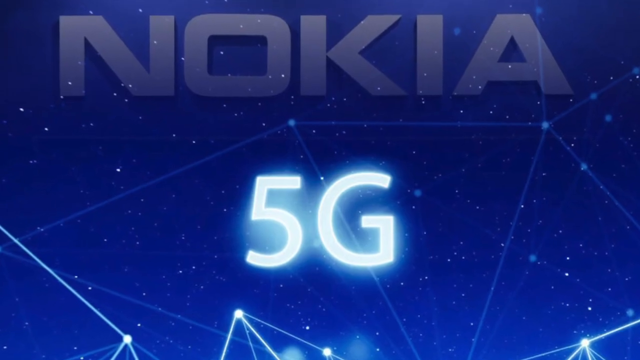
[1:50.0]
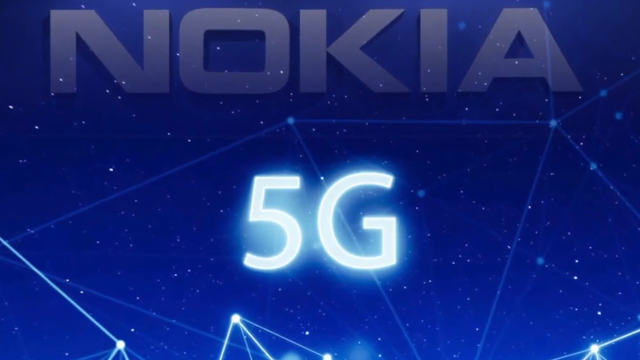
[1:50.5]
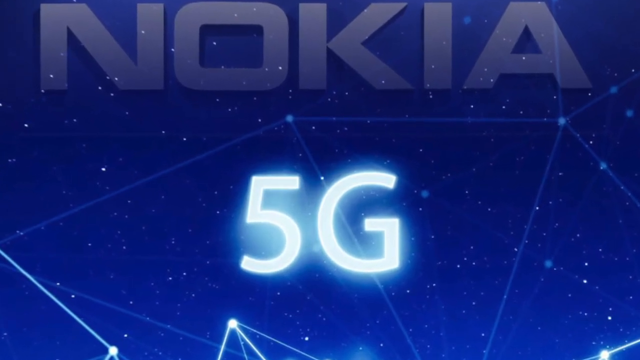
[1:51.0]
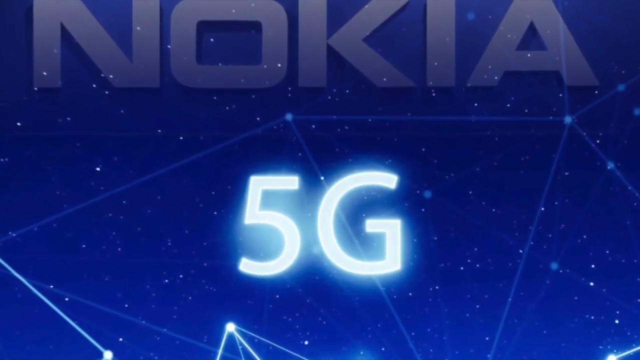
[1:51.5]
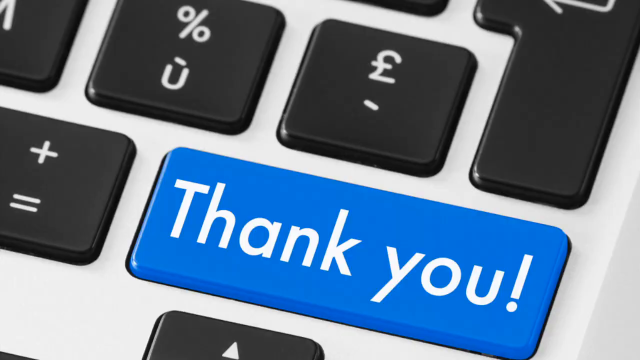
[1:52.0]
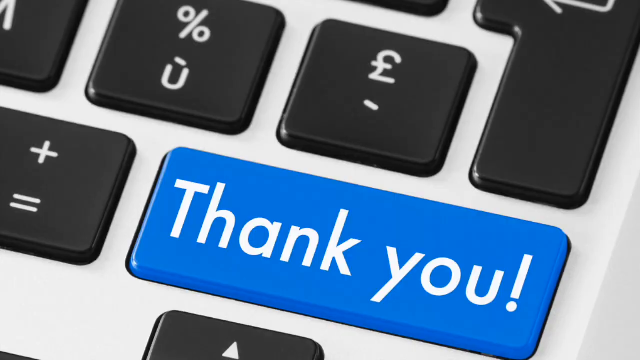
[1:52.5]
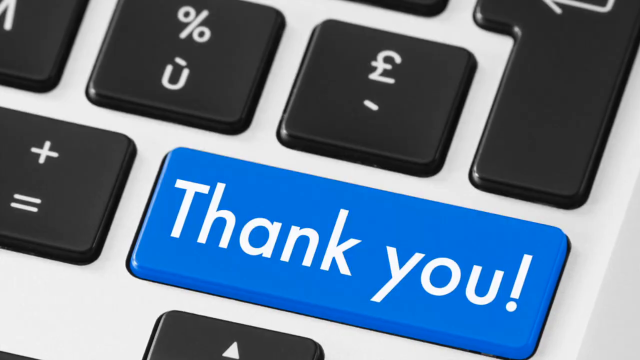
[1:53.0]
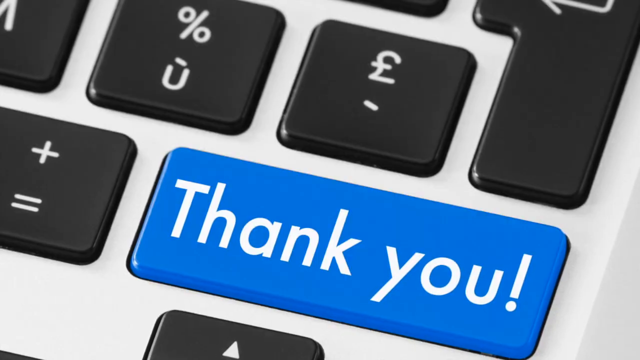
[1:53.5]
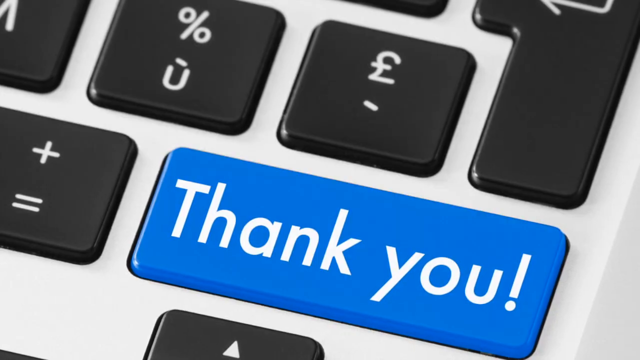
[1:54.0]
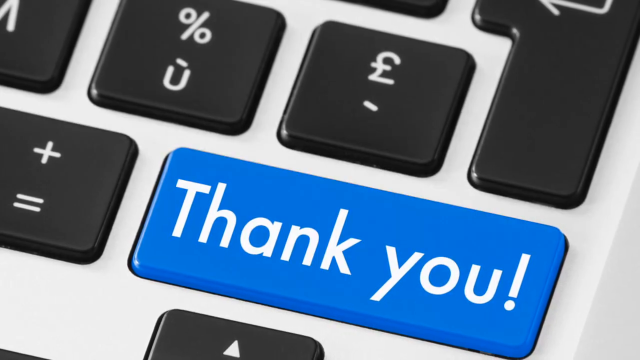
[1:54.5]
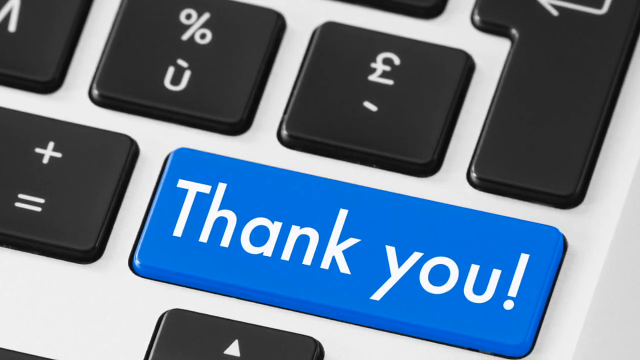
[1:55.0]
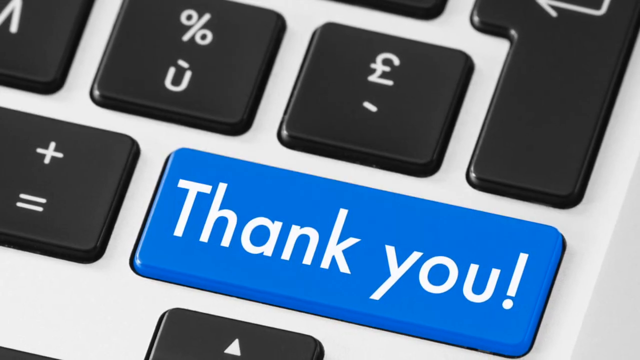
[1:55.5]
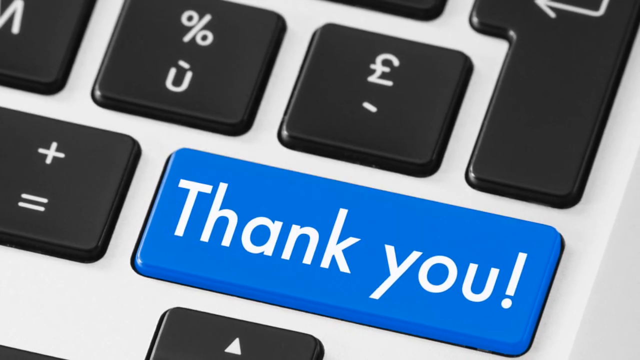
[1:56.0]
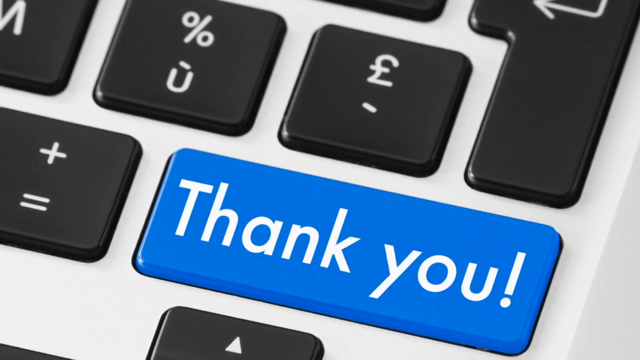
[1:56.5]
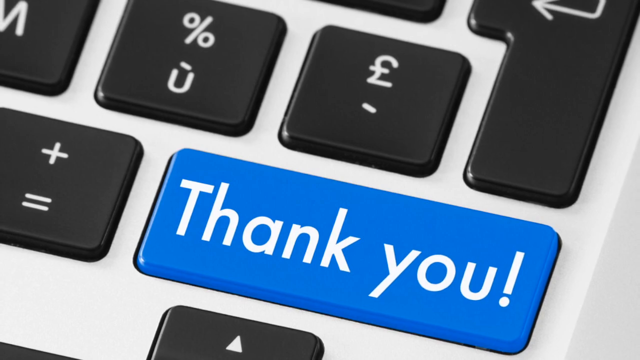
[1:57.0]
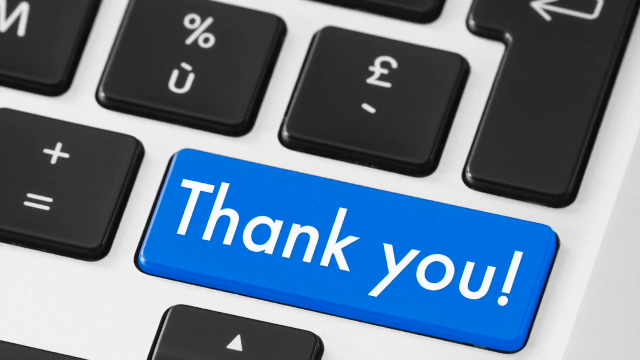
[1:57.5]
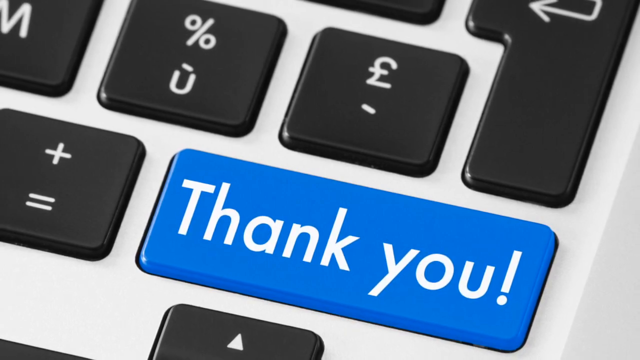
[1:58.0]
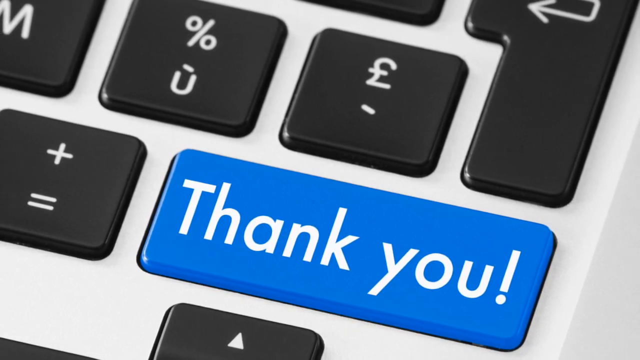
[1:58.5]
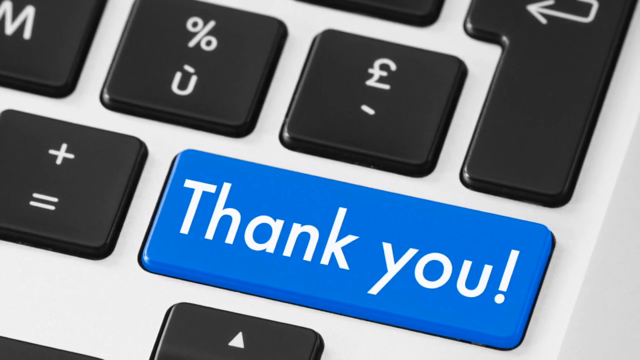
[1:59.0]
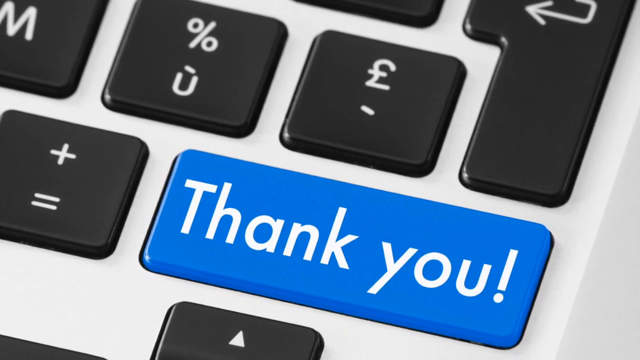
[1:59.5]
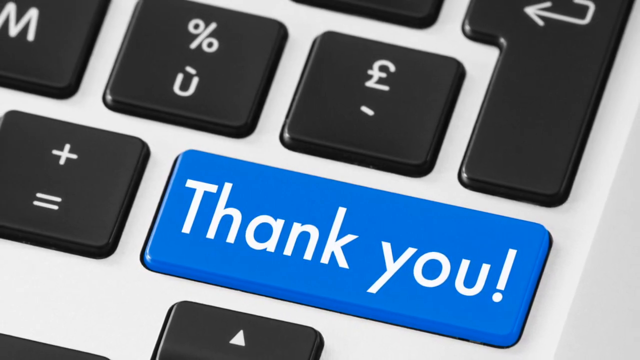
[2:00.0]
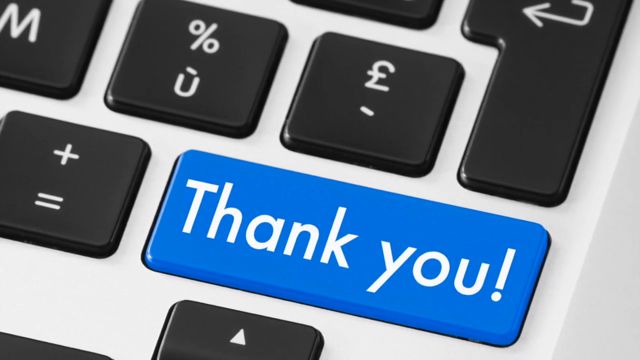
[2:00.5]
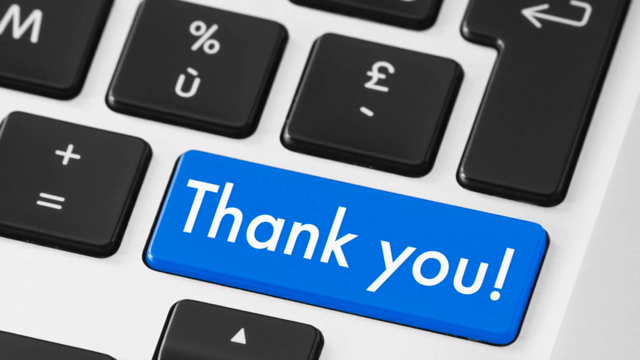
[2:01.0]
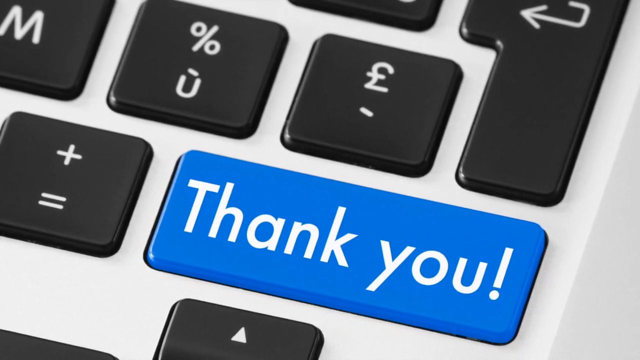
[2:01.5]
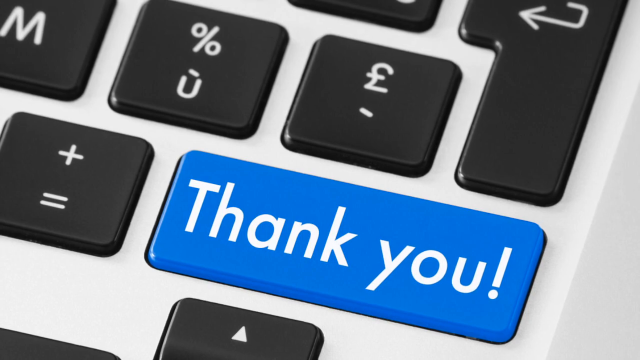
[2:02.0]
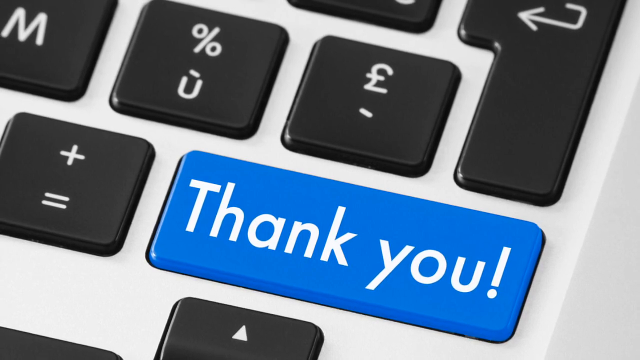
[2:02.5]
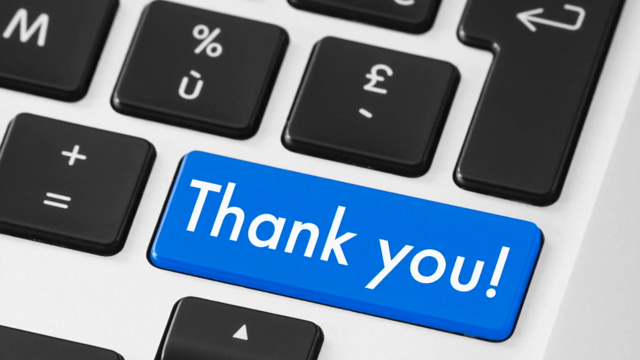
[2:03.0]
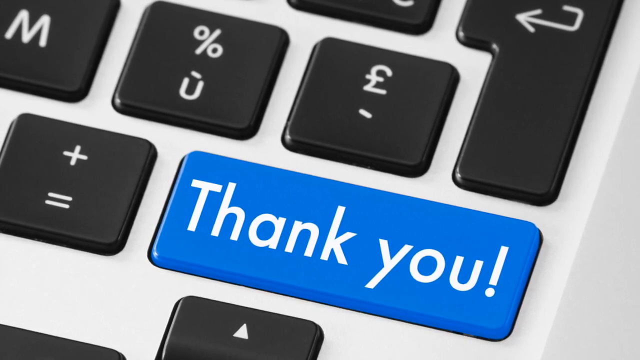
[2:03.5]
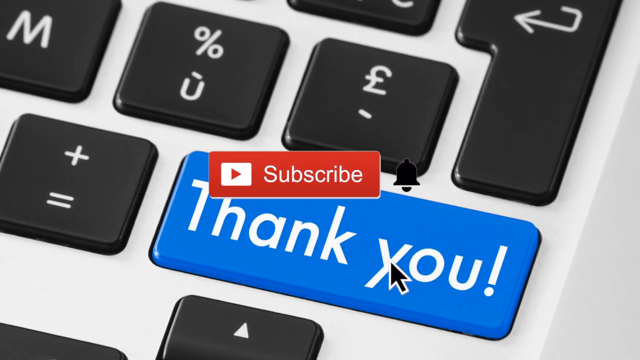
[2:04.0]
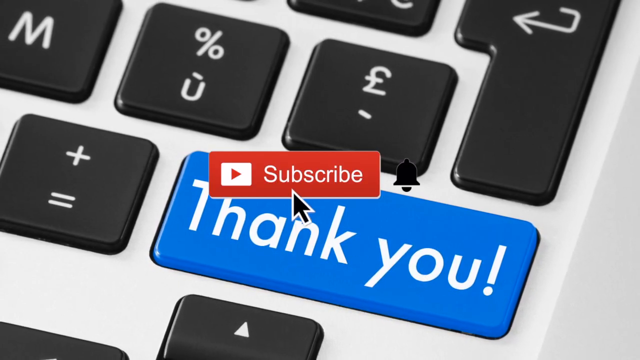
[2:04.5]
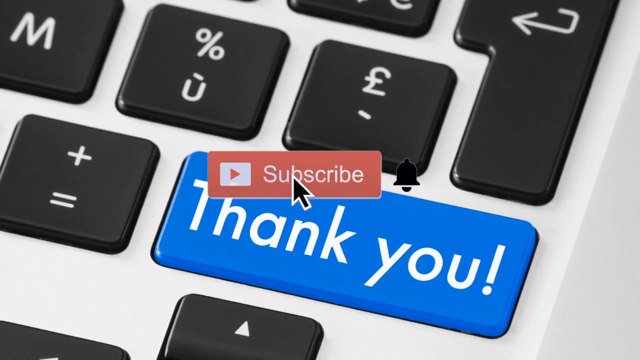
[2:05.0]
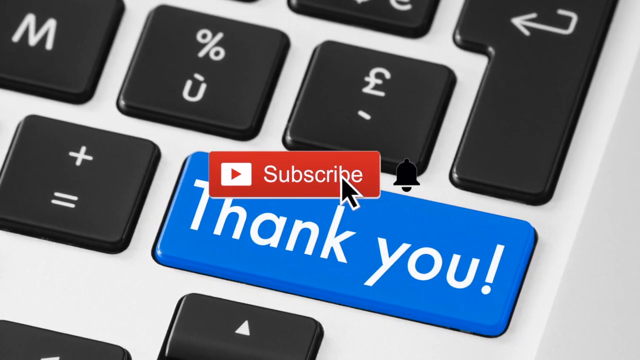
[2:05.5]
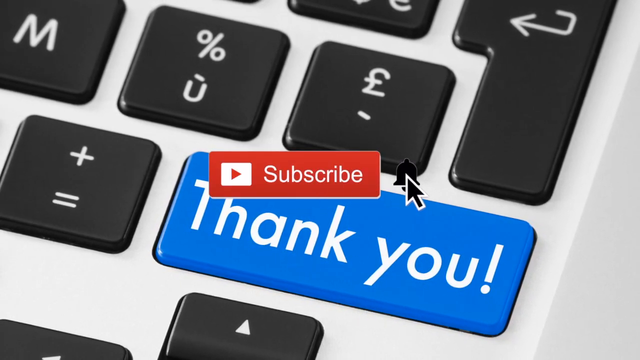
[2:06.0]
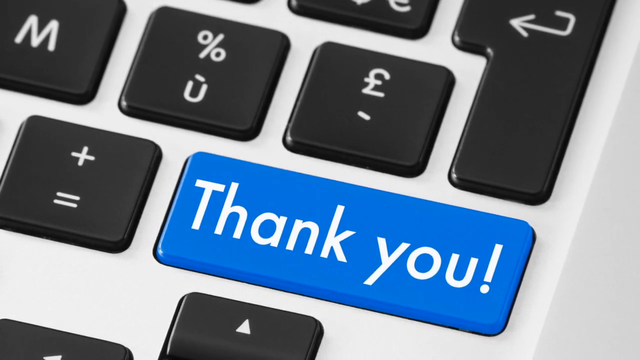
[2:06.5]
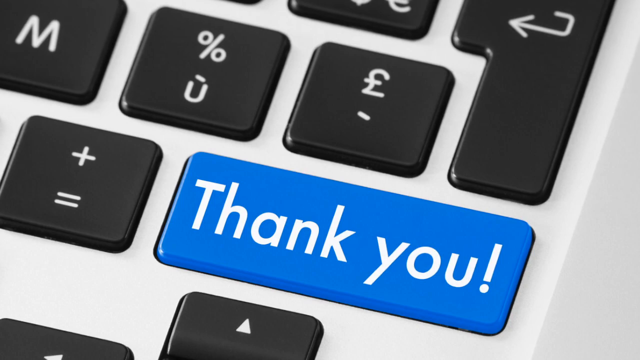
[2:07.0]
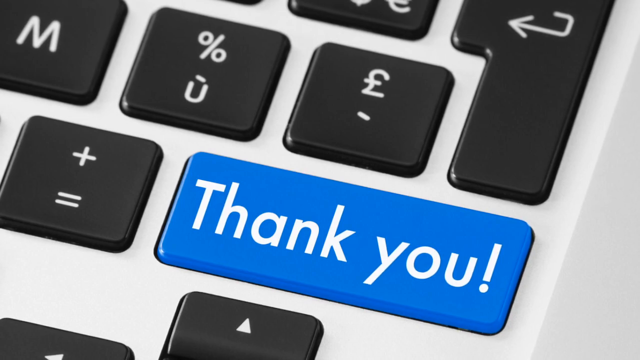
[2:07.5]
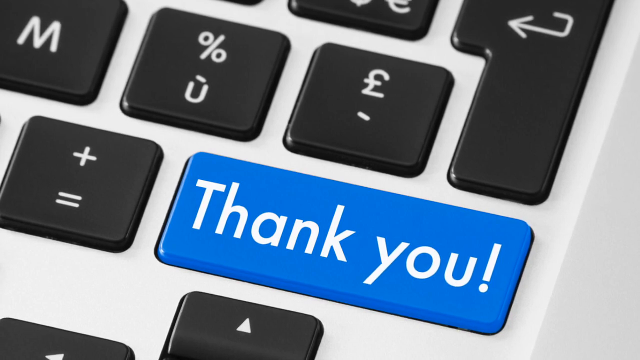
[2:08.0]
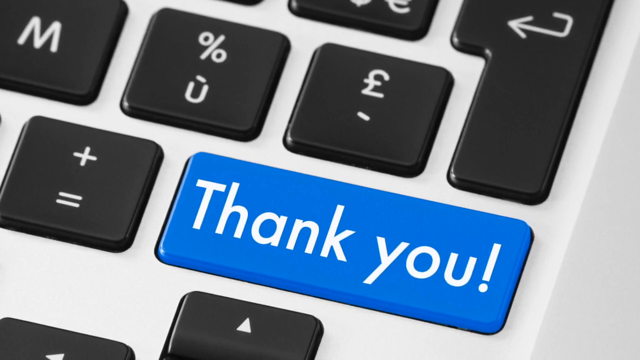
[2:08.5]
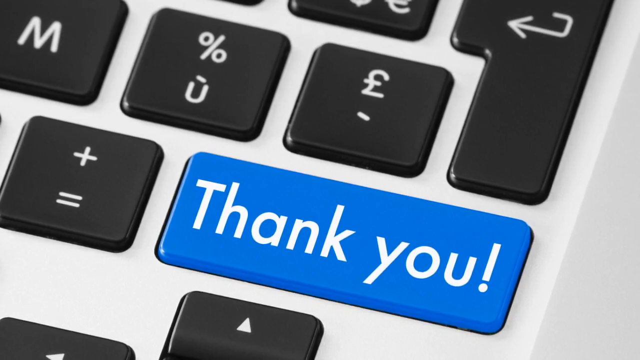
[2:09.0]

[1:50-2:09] An image of outer space shows what looks like constellations connected by dots and lines in the background. Transparent text reading "Nokia" is at the top, and in the center of the screen "5G" is illuminated in translucent, transparent lighting. The camera zooms in on the 5G. Then a calculator appears with a plus sign, an equal sign, a percentage sign, other buttons, a return button, and a blue button with white font reading "thank you!". The camera stays on it for a while, then zooms out very slowly and continuously to show more of the buttons, including a button at the bottom with an up arrow. A red button with a YouTube symbol inside it appears, reading "subscribe" in white font. A black cursor with white outlining clicks the subscribe button, then moves over to a bell on the right side of that button and clicks it as well. The scene then stays there.